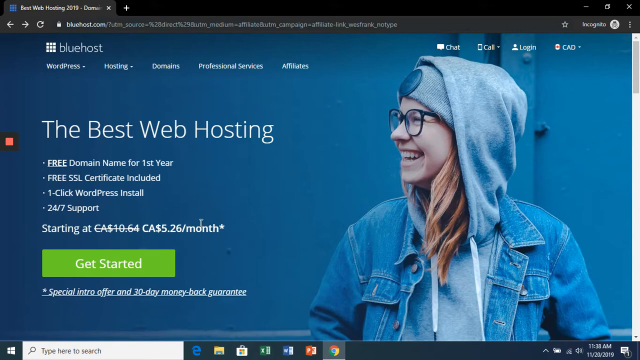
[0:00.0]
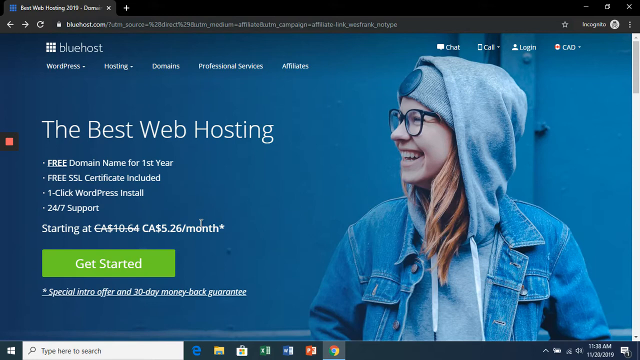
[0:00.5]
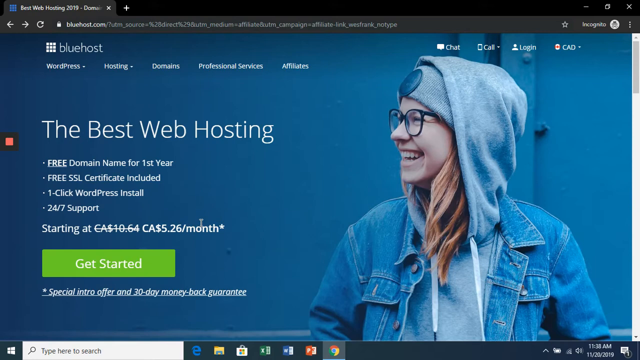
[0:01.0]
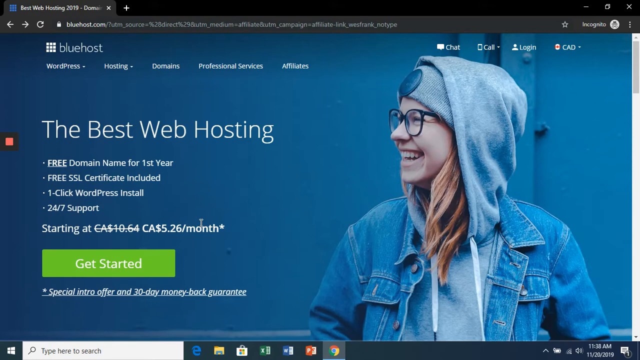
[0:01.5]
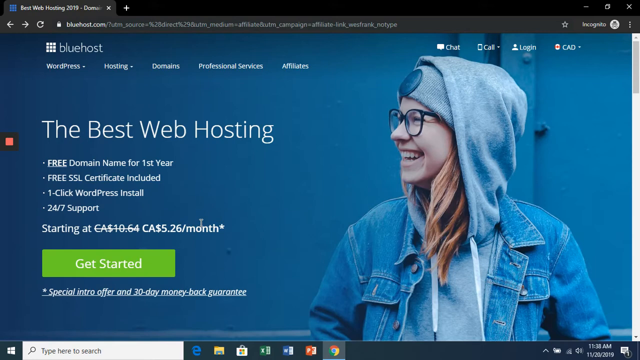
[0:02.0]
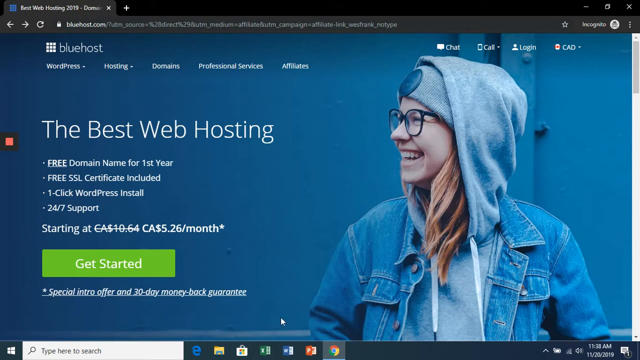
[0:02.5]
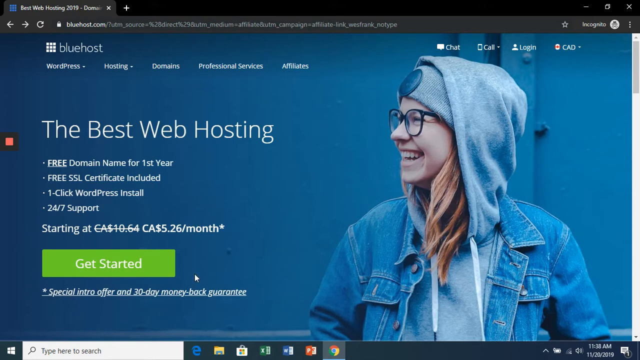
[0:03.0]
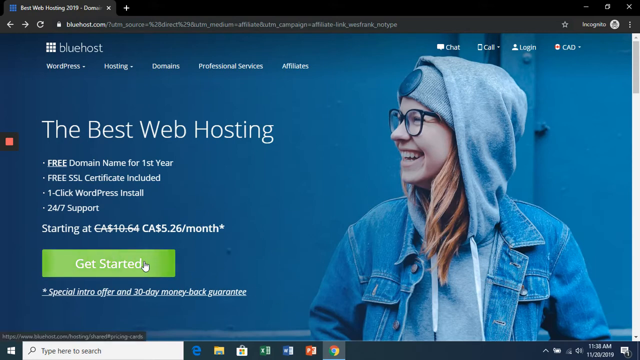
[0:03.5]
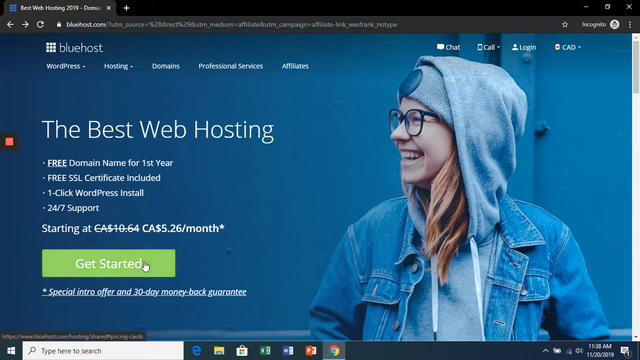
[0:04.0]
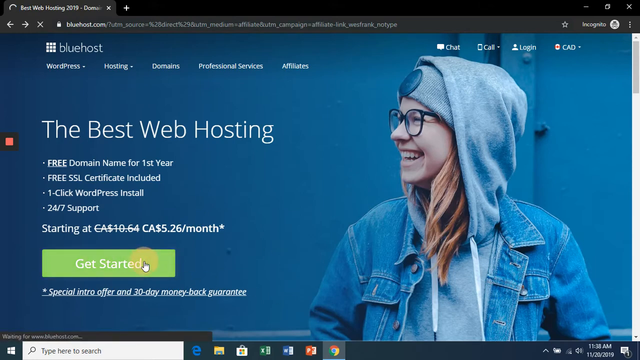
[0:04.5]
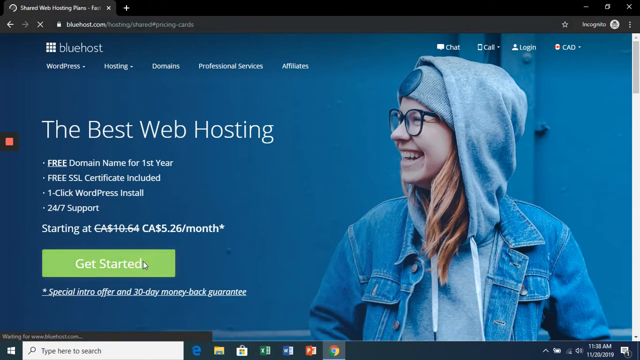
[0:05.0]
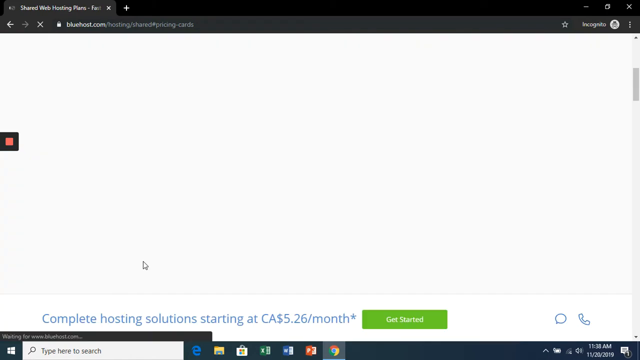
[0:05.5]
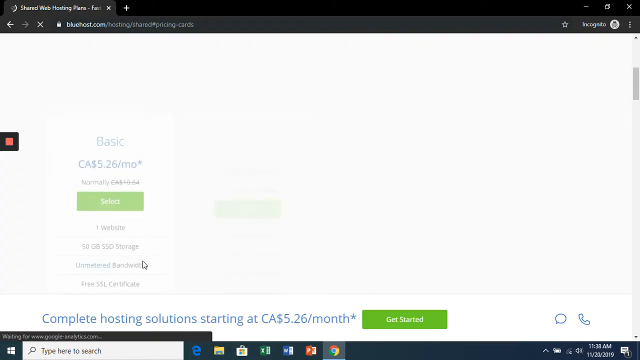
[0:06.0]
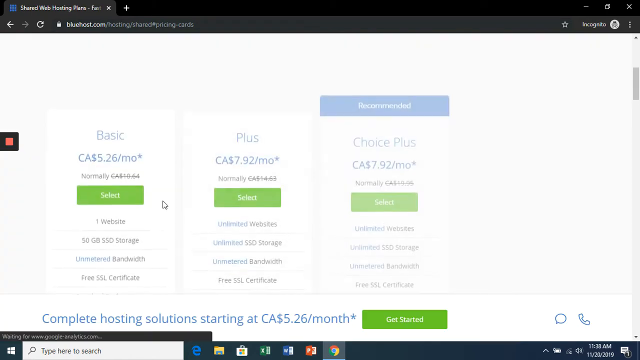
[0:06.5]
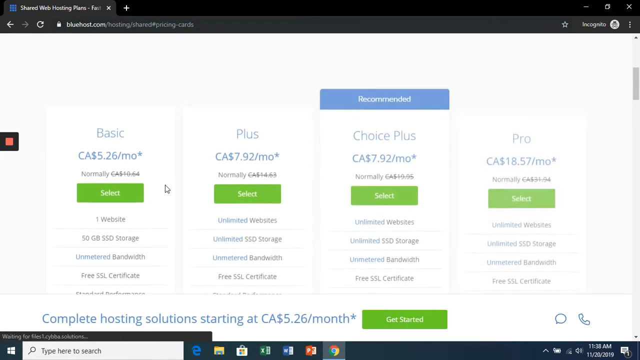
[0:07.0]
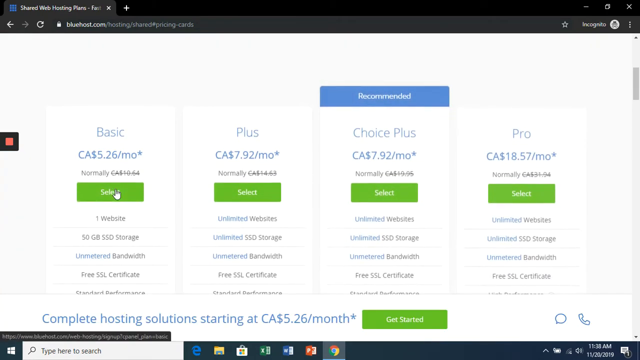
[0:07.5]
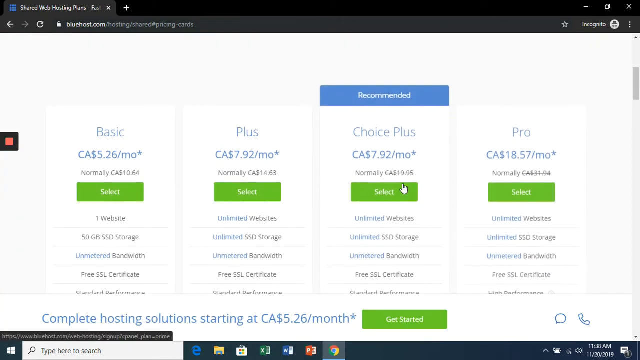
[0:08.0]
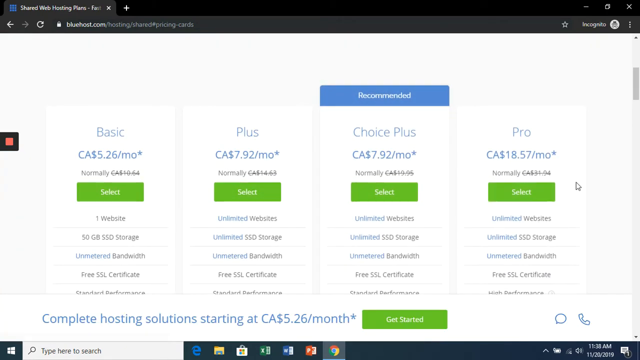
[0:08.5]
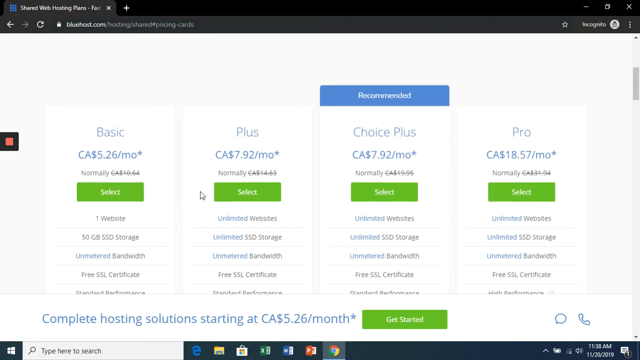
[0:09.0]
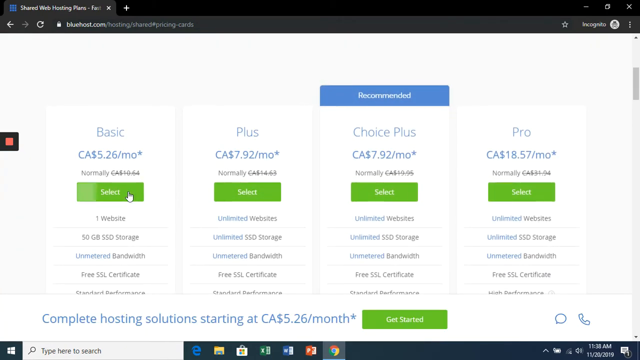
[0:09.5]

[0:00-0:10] The video opens on the homepage of the Bluehost.com website, which has a blue background and shows a person wearing denim, a light blue hoodie and glasses; she is female, with kind of brownish hair, probably around 25 years old. White text reads "the best web hosting", relating to the Bluehost.com service. The cursor in the web browser clicks "get started", and the browser navigates to a page with a white background listing Bluehost.com's pricing plans: the basic plan, the plus plan, the choice plus plan and the pro plan, each at a different cost per month.